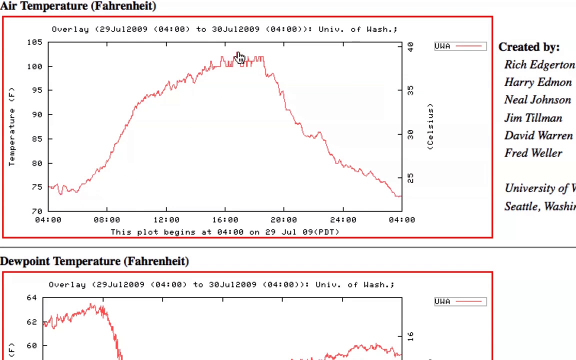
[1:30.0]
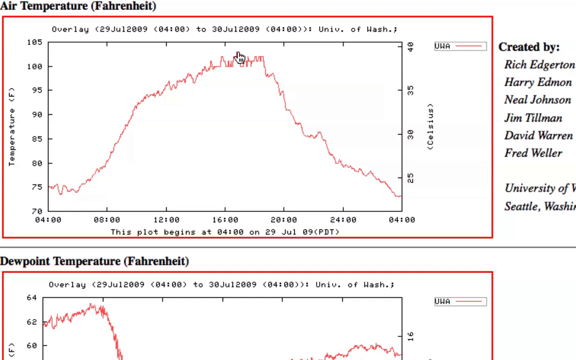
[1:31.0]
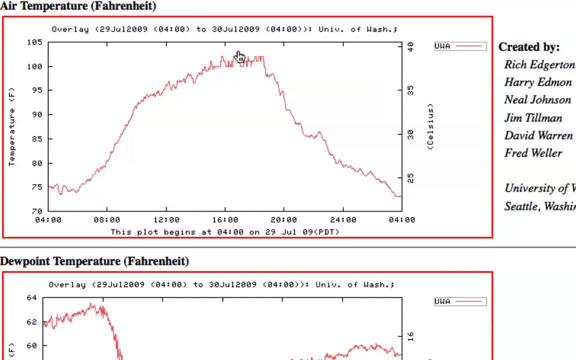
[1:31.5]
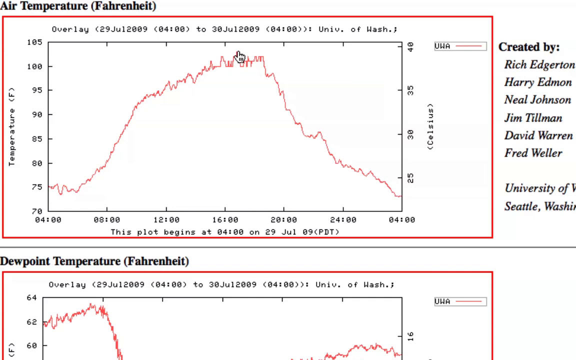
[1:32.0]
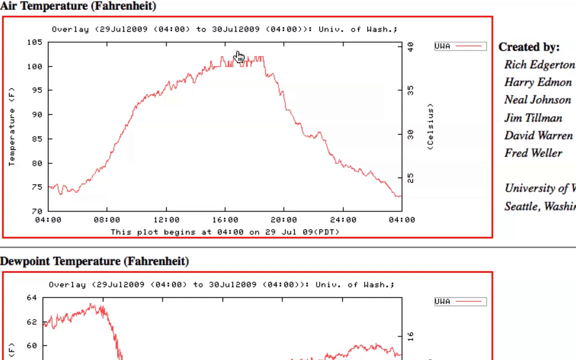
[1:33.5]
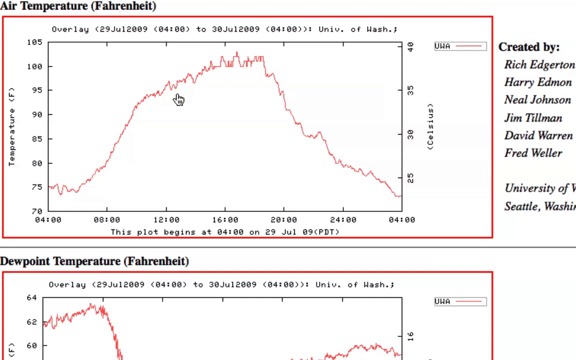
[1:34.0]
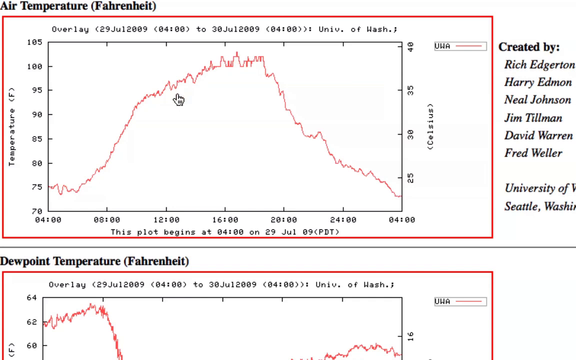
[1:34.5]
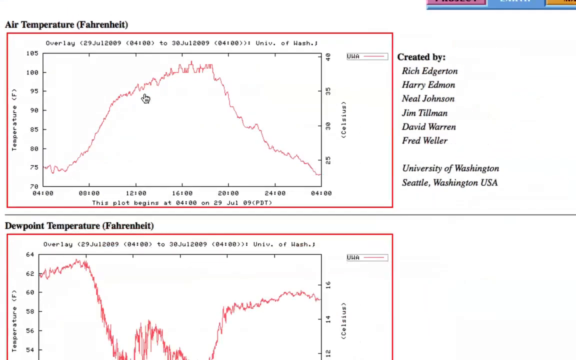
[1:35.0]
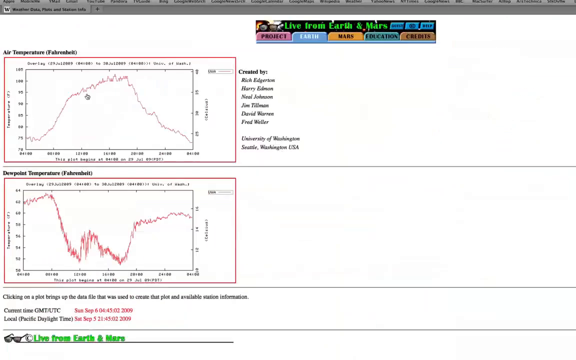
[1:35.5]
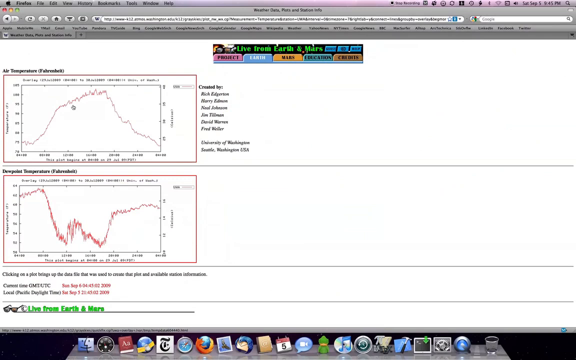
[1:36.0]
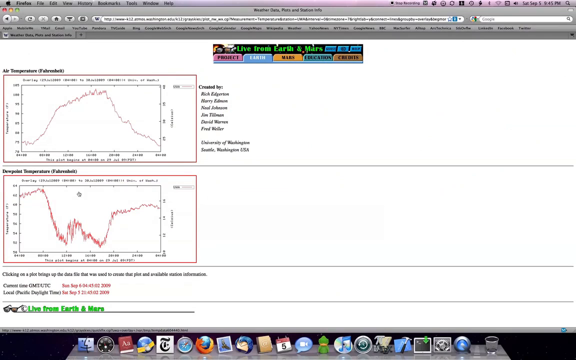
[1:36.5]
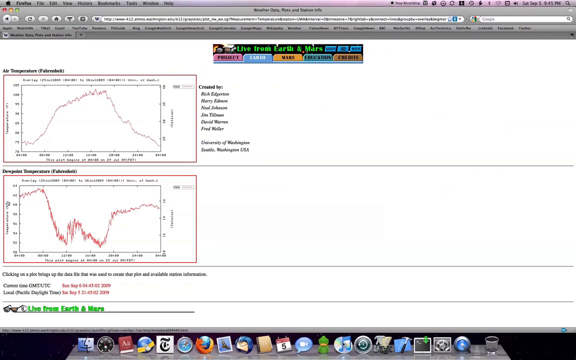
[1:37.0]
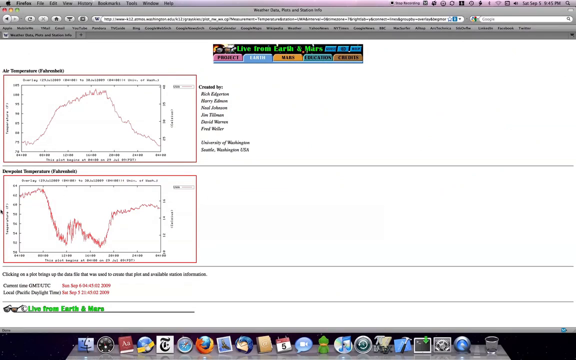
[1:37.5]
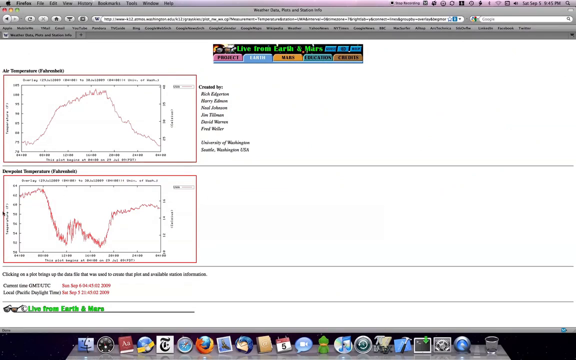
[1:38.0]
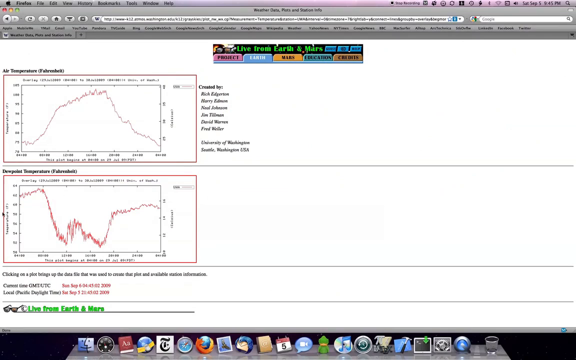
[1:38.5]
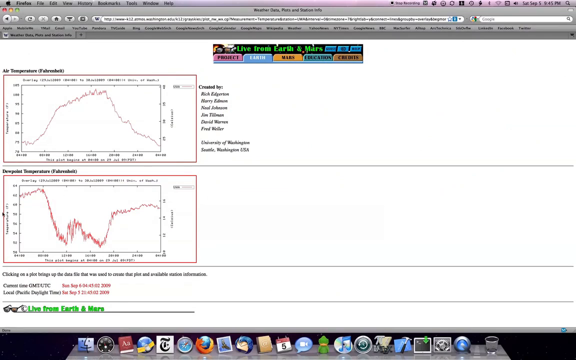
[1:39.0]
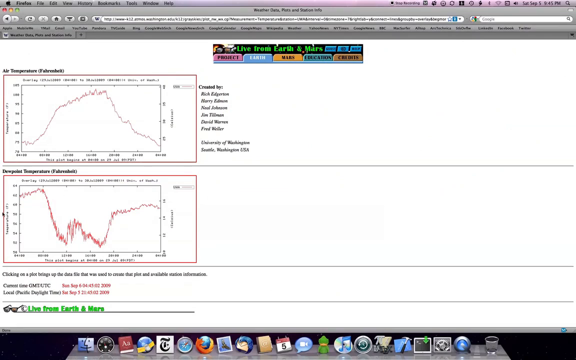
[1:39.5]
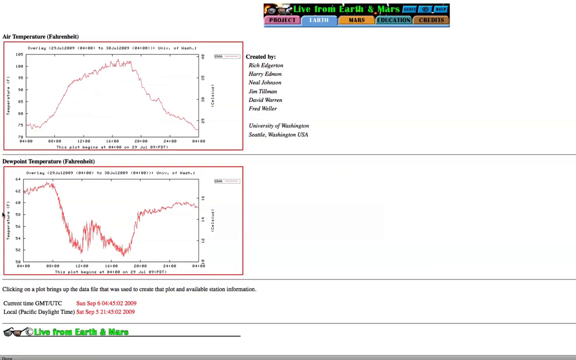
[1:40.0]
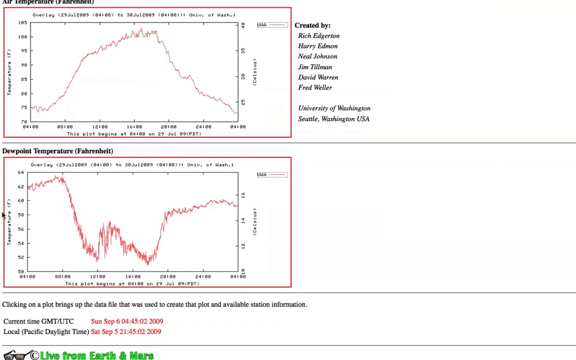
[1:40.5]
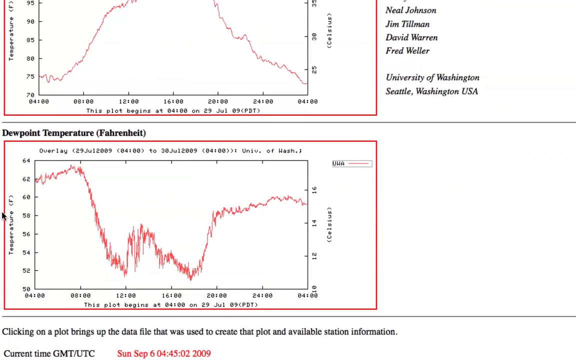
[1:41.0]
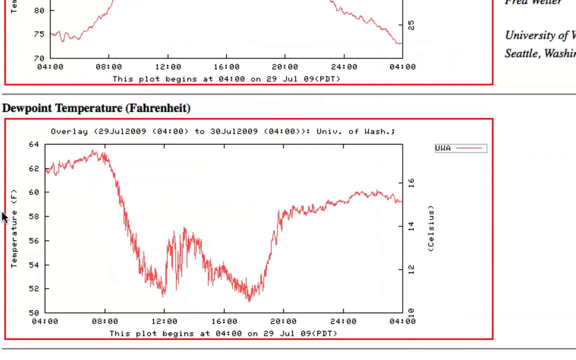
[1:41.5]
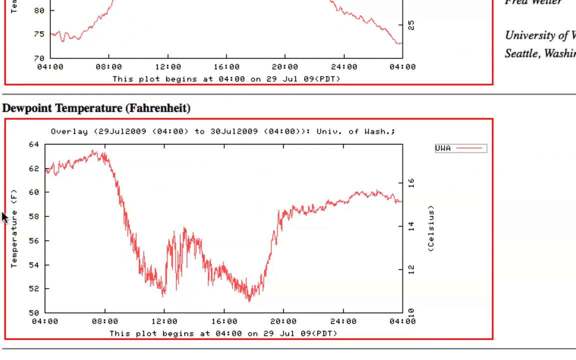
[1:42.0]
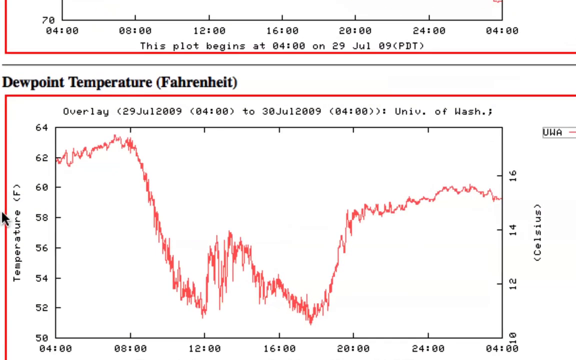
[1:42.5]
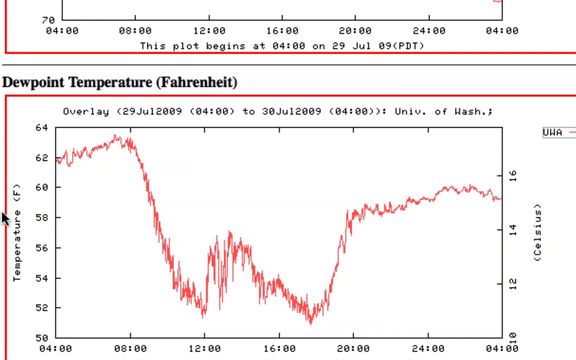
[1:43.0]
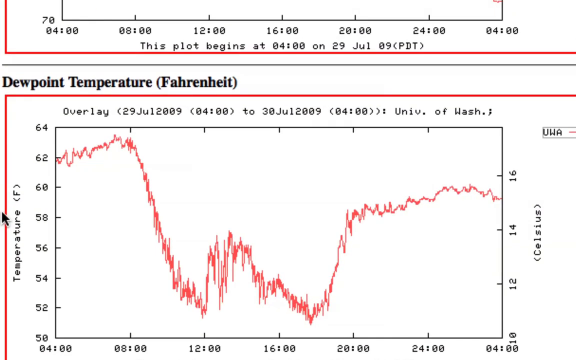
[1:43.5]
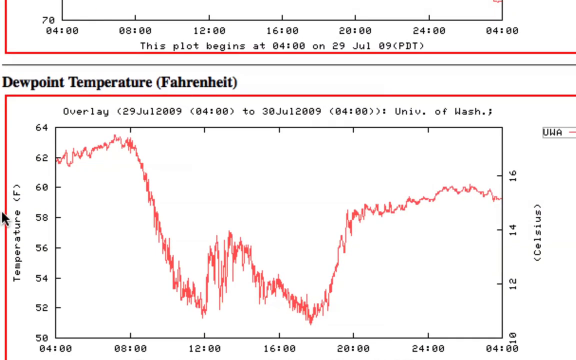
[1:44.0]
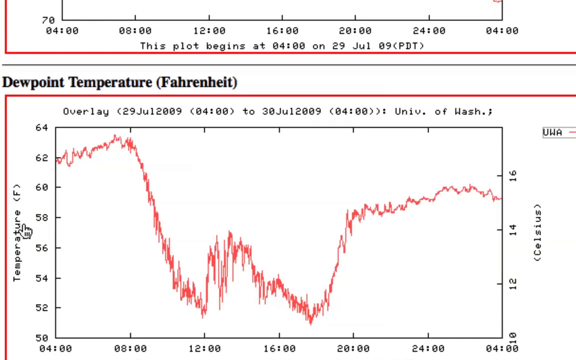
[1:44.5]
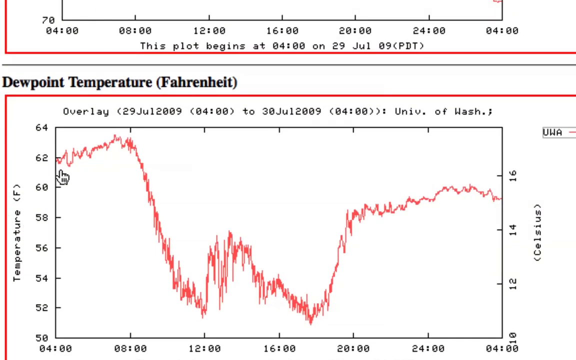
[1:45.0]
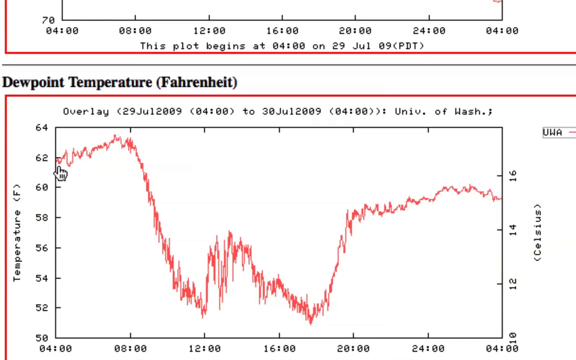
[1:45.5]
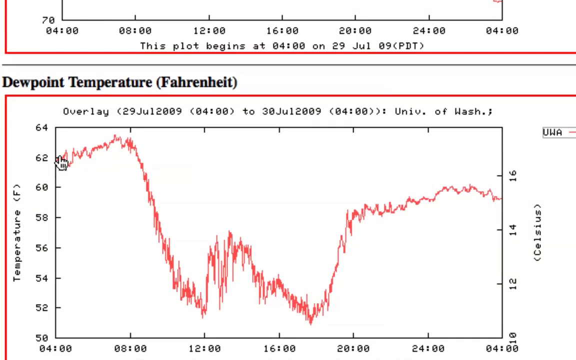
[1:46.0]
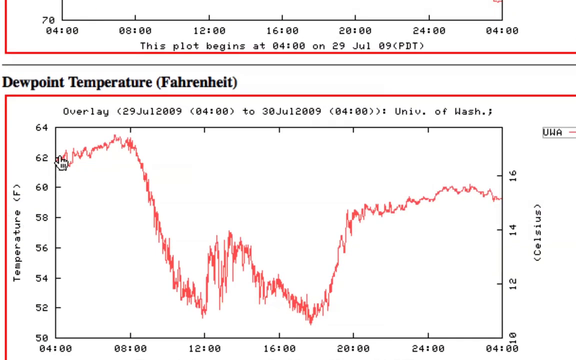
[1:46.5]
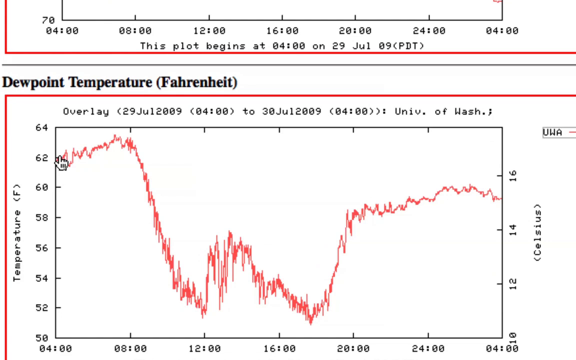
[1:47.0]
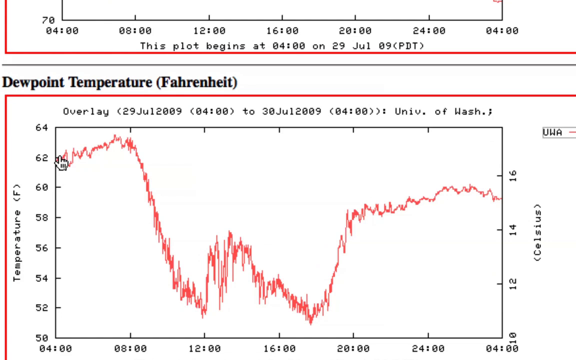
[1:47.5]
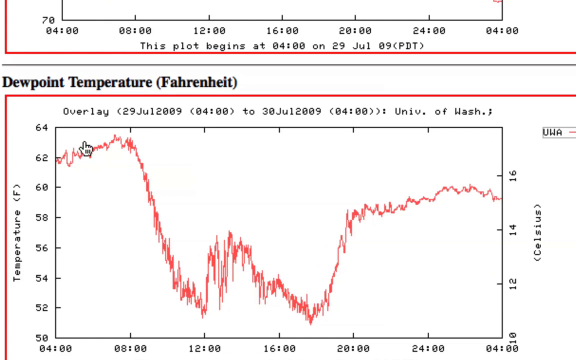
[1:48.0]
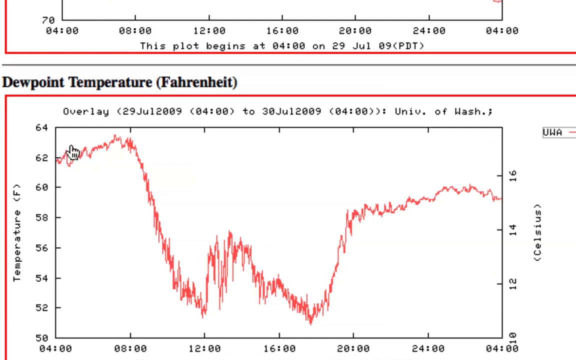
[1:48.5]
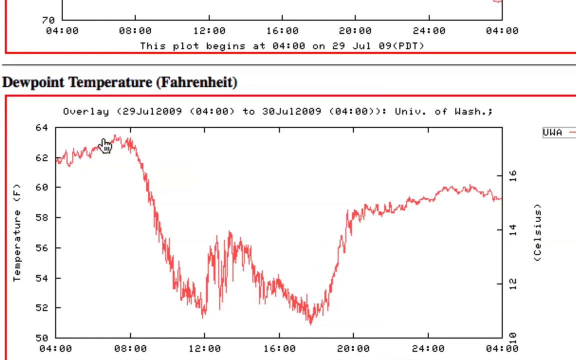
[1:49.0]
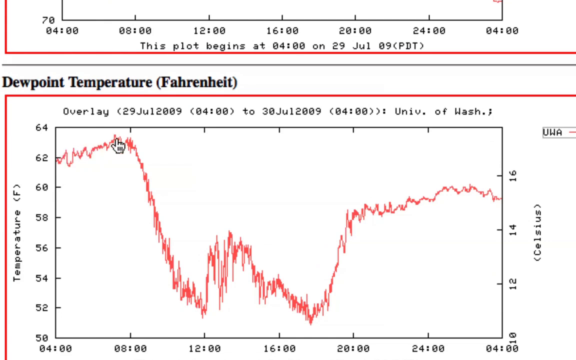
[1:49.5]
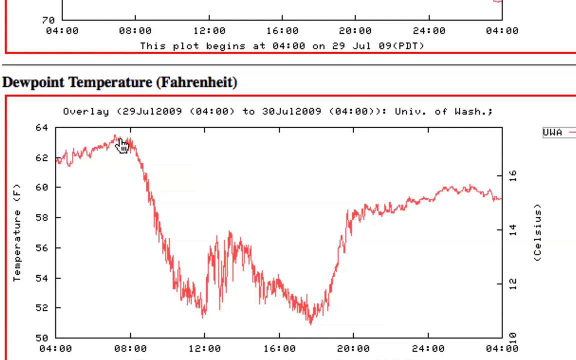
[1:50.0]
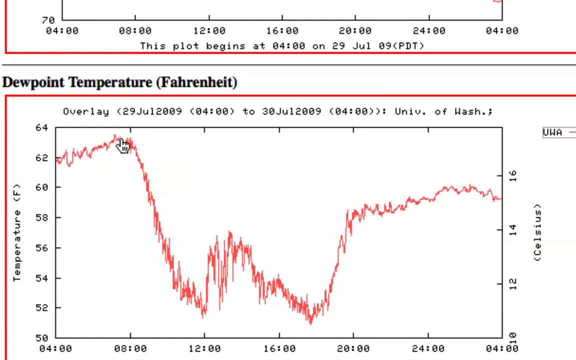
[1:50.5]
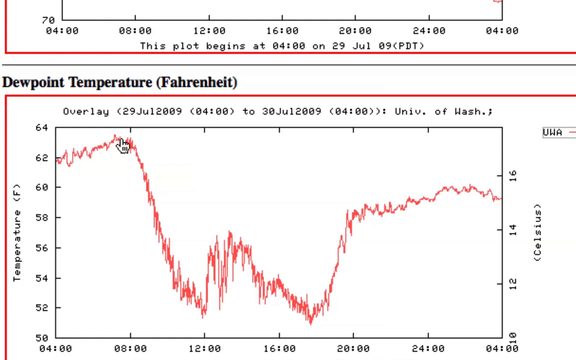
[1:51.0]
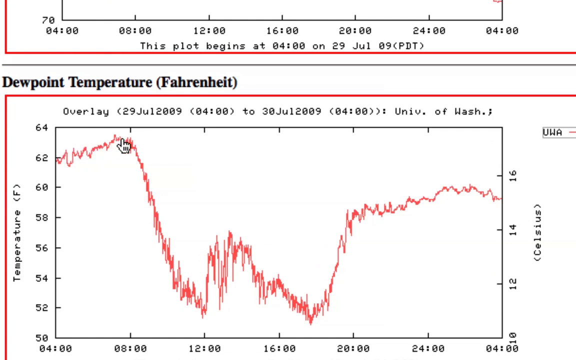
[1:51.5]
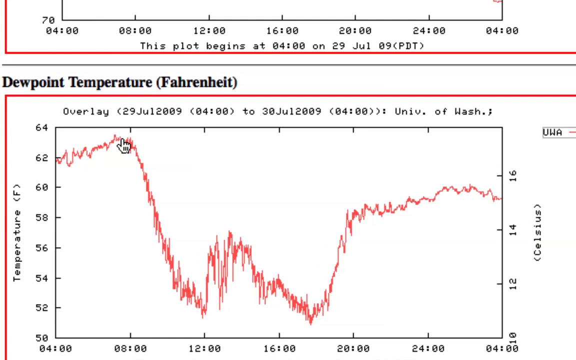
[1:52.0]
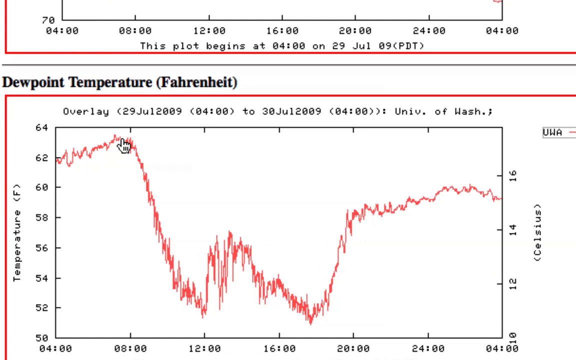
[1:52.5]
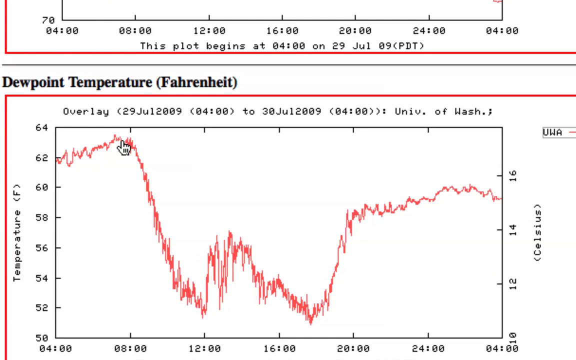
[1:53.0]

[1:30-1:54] Two temperature graphs created by the University of Washington are on screen. The view zooms into the bottom graph, which shows the dew point temperature, with degrees Fahrenheit on the left-hand side and degrees Celsius on the right-hand side. It covers July 29th of 2009 at 4 o'clock to July 30th of 2009 at 4 o'clock, for the University of Washington in Seattle, Washington. At 4 o'clock on the 29th the dew point temperature starts at about 62 degrees, rises to almost 64 degrees, then dips drastically around midnight to 52 degrees. It rises slightly again shortly after to about 56 degrees, dips back down to 52 around 1700 hours, and then climbs steadily until 4 o'clock the next day, getting back to about 60 degrees. The cursor hand kind of follows along the trend, showing how it drops drastically after about 8 o'clock. Then the graph disappears and the QuickTime Player skin with the clouds in the background is back on screen.